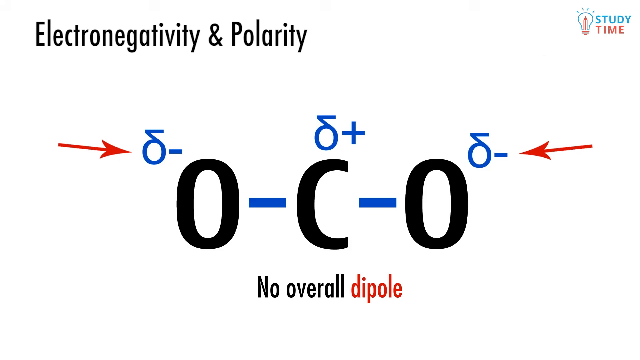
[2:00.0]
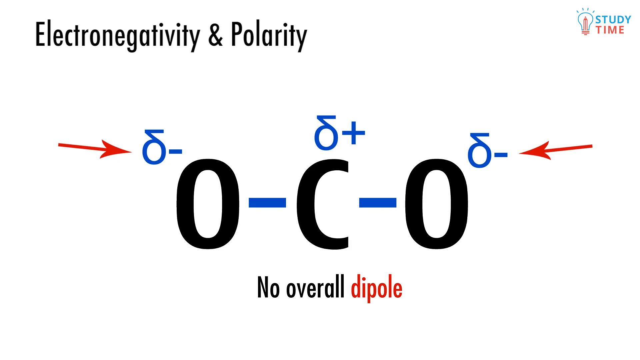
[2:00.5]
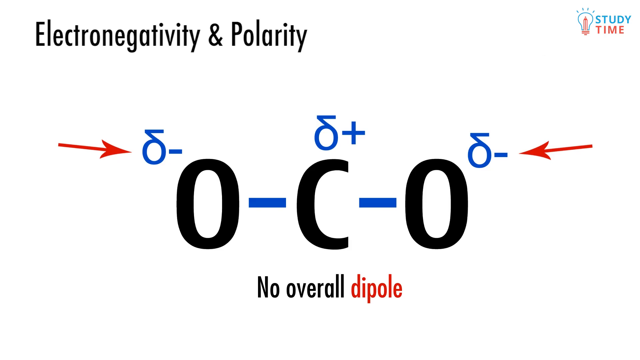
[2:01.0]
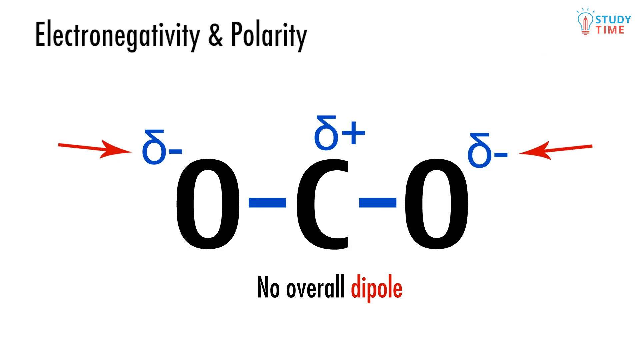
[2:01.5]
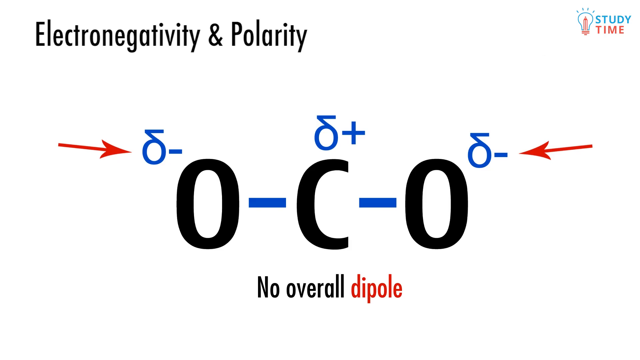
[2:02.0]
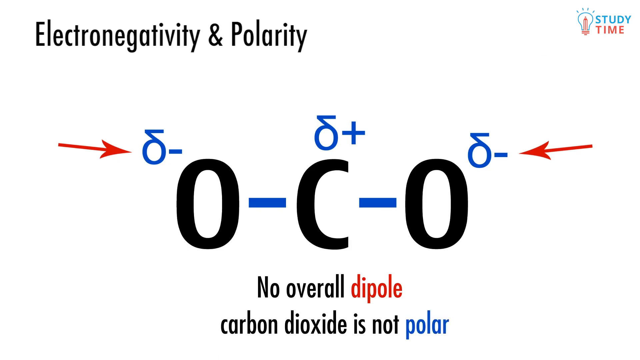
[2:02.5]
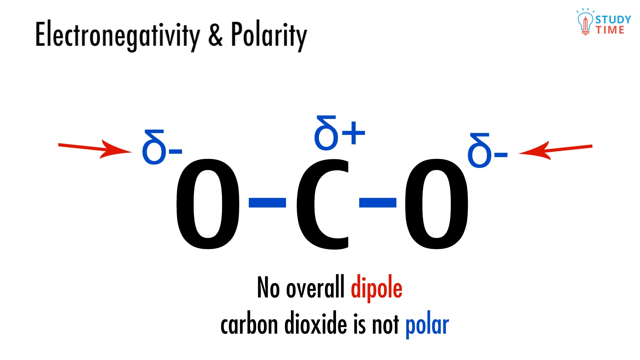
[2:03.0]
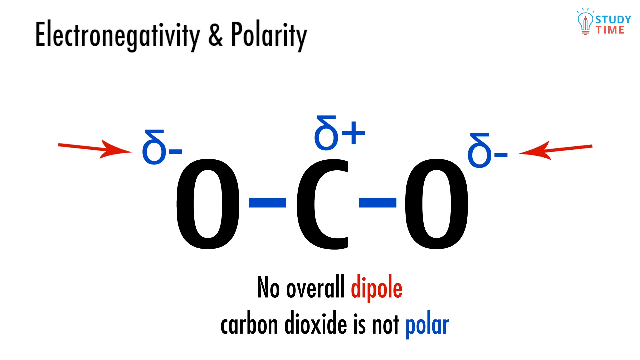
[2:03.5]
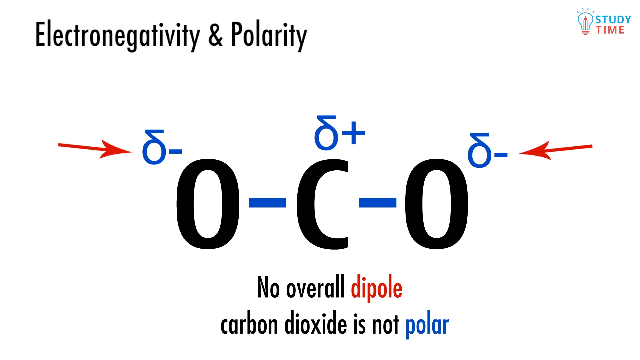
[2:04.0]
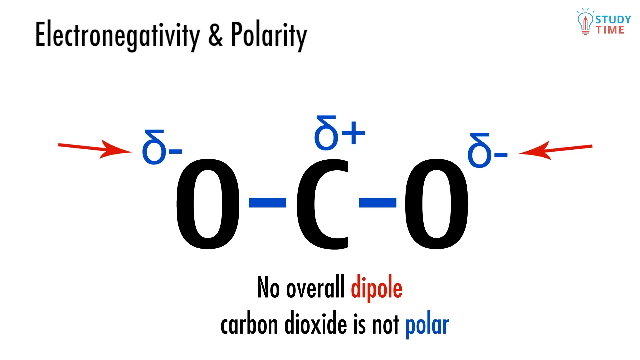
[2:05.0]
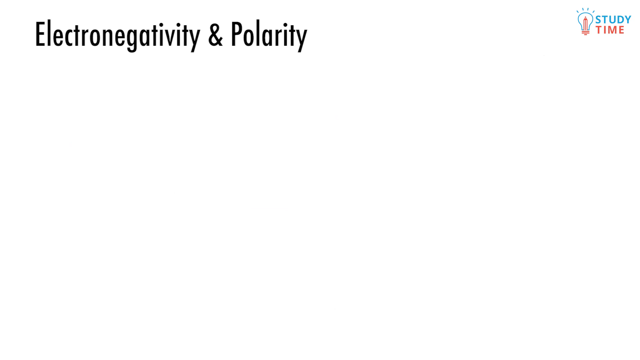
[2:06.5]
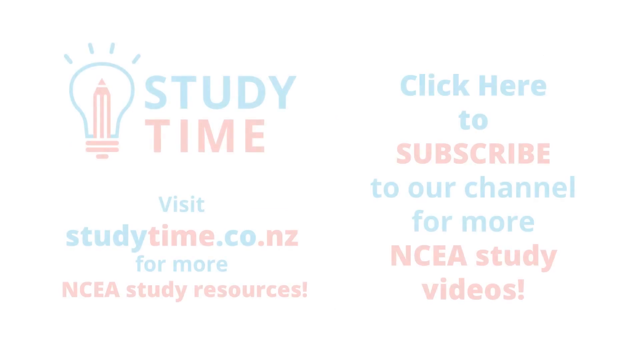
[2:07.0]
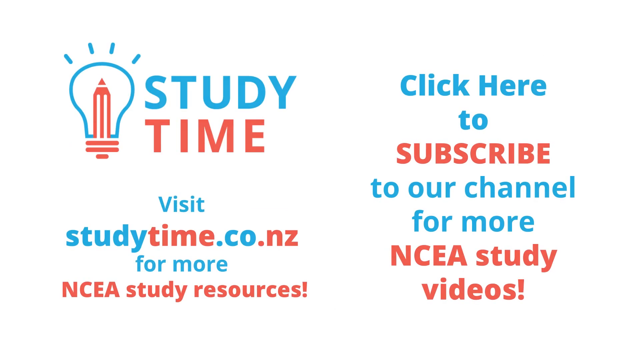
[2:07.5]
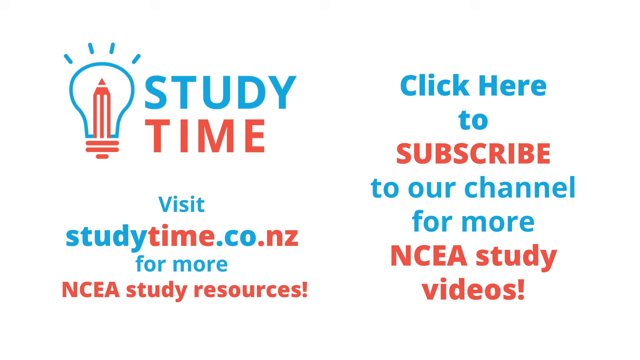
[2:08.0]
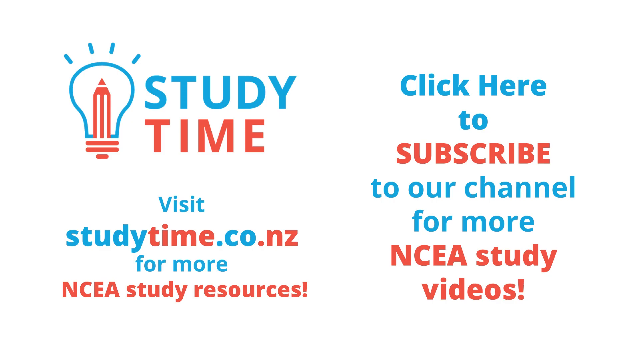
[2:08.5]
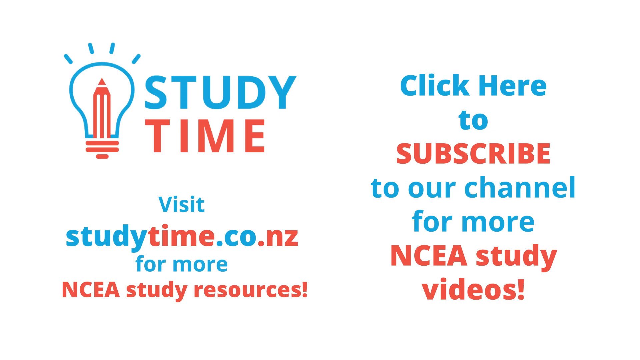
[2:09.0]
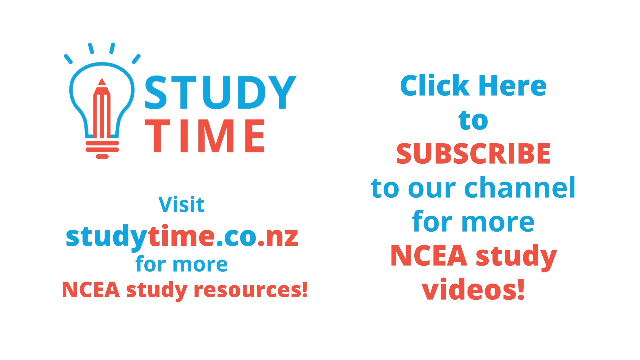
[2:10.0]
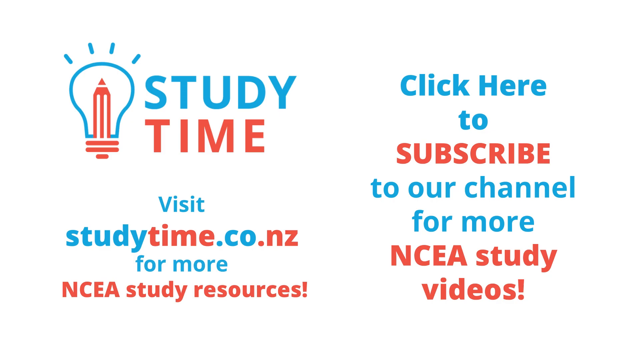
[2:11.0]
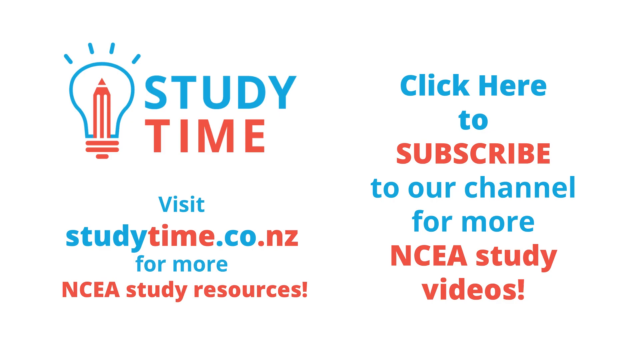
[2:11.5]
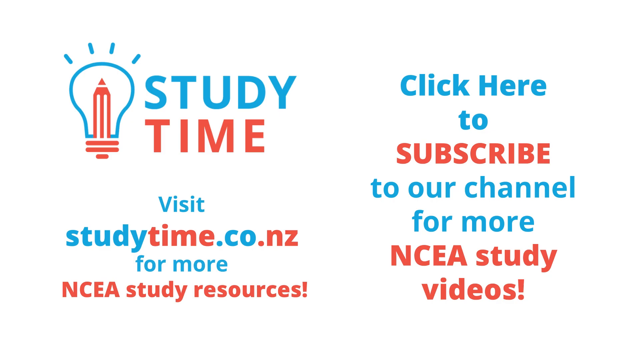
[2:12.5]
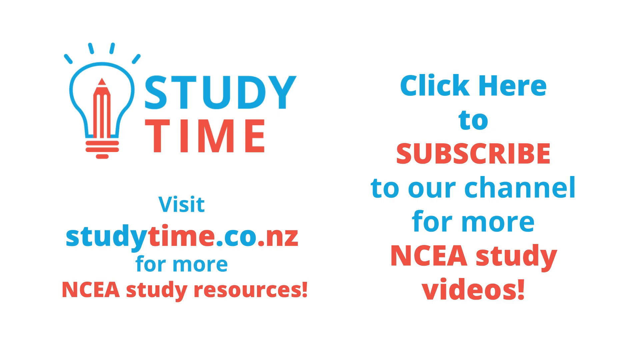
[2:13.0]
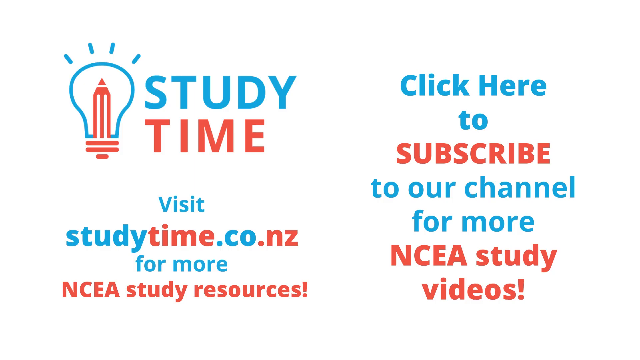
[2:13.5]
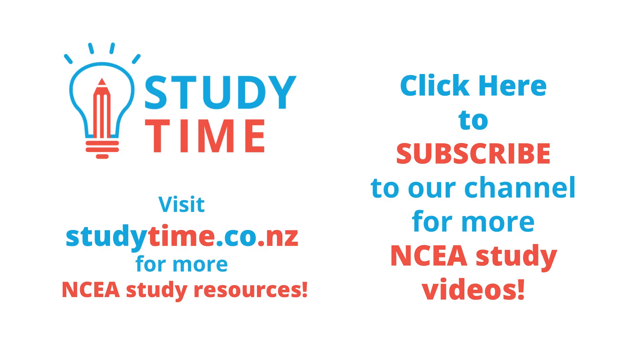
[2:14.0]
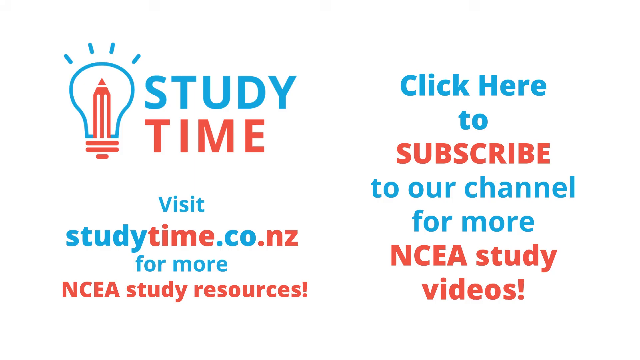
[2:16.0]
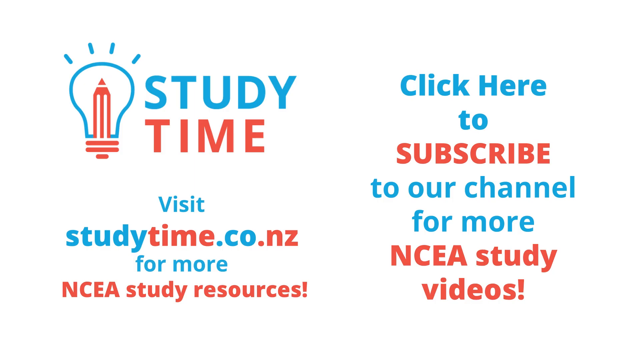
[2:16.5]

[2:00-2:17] Arrows in the center of the screen point toward the "slightly" symbols on both the left and right sides. The screen apparently indicates that there is no overall dipole and that carbon dioxide is not polar. The video then cuts to an end screen showing the "study time" logo in the top left, with text below it reading "visit studytime.co.nz for more NCEA study resources". On the right side, text reads "click here to subscribe to our channel for more NCEA study videos". All the text follows a consistent variation of blue and red throughout the end screen.